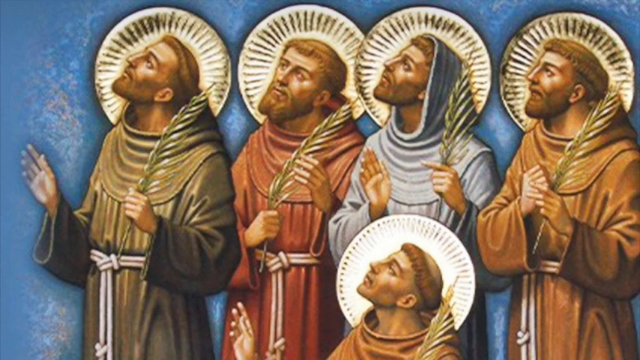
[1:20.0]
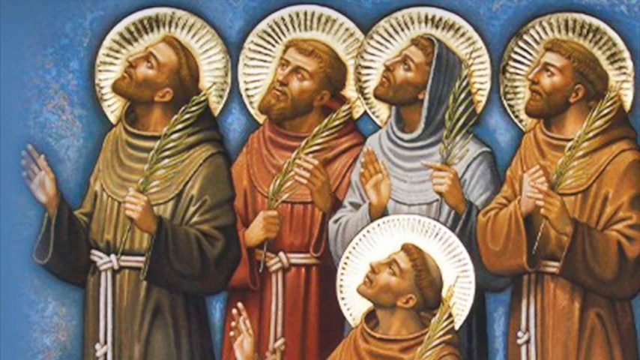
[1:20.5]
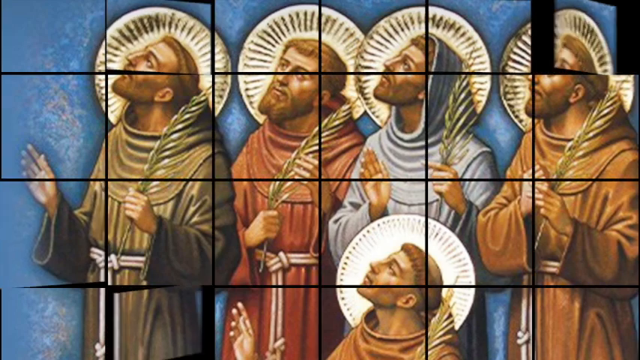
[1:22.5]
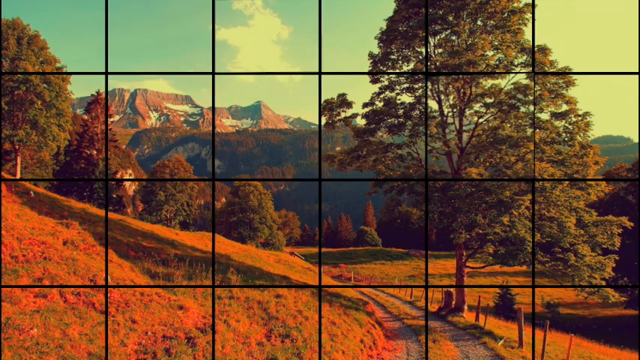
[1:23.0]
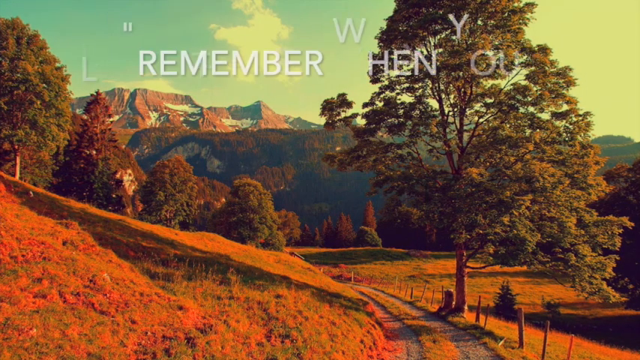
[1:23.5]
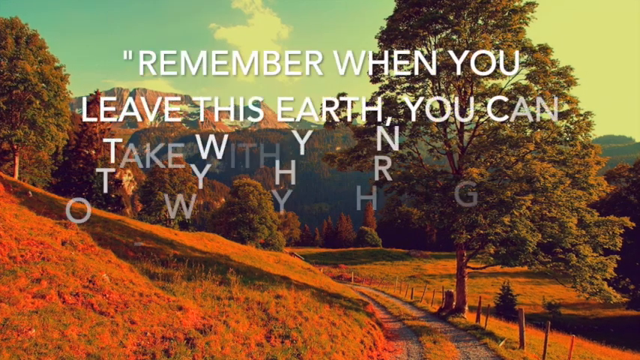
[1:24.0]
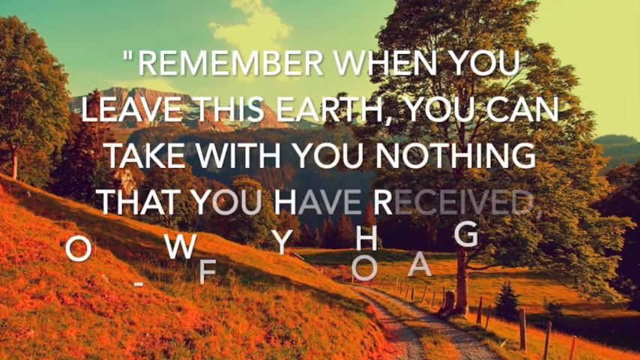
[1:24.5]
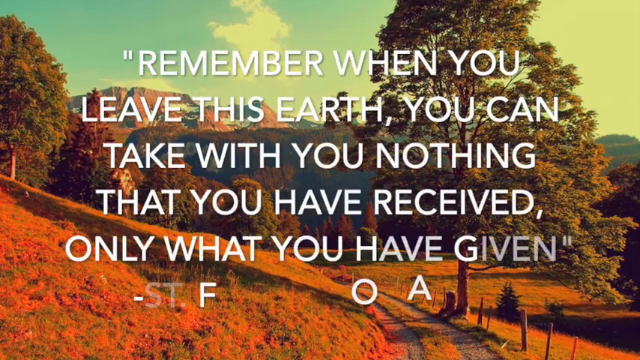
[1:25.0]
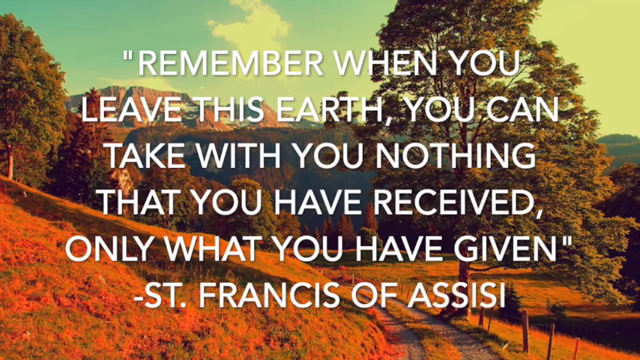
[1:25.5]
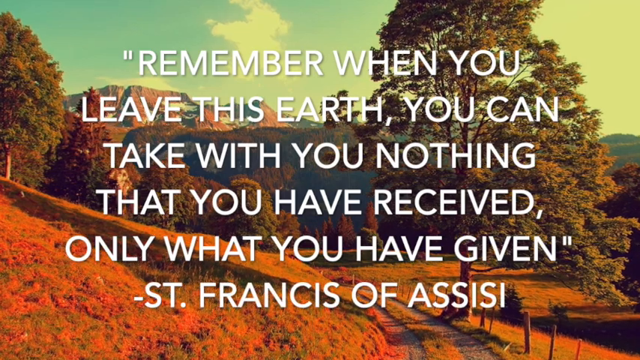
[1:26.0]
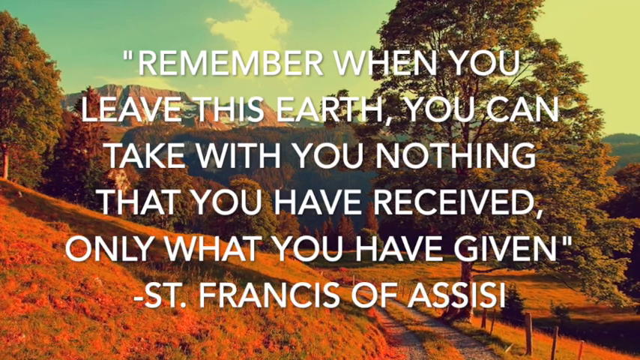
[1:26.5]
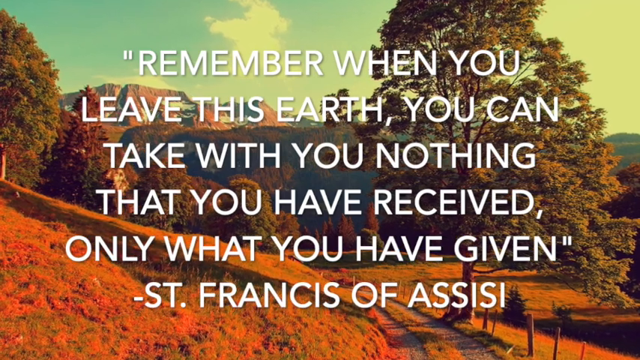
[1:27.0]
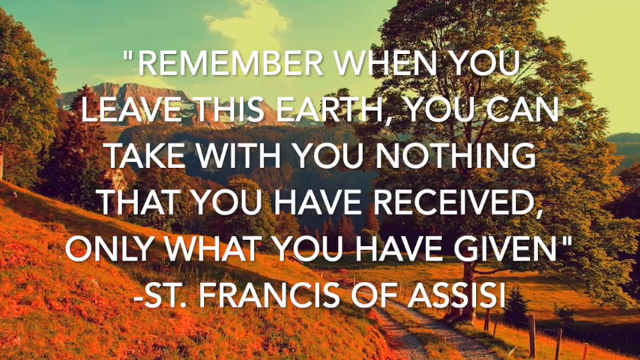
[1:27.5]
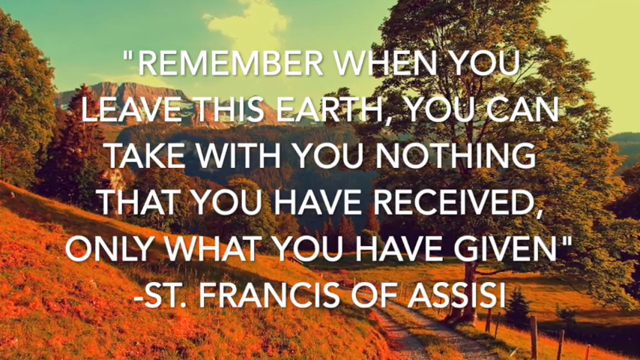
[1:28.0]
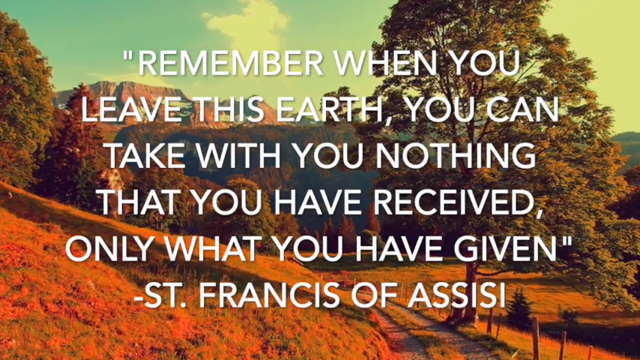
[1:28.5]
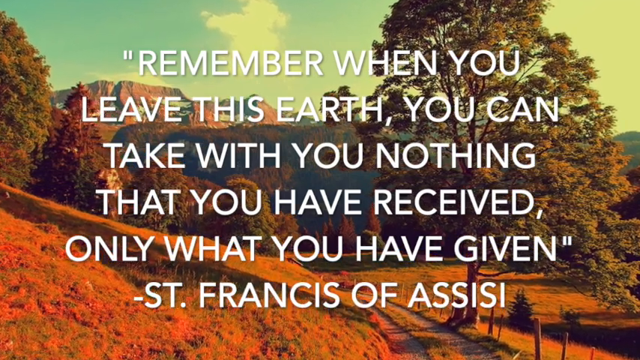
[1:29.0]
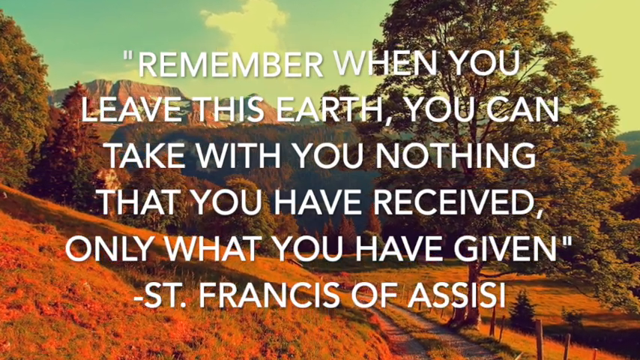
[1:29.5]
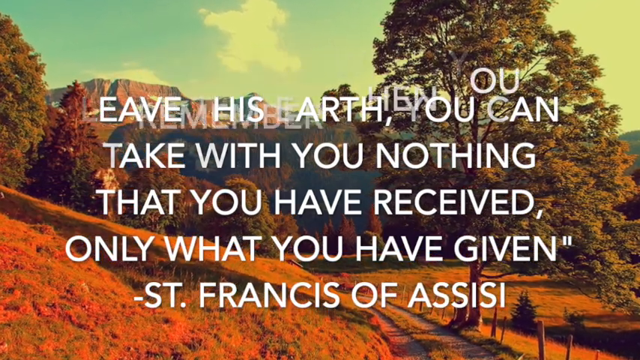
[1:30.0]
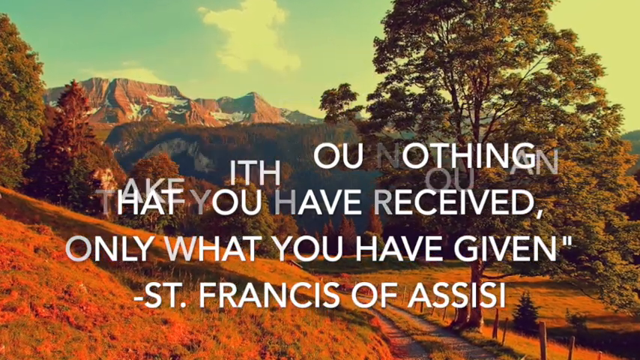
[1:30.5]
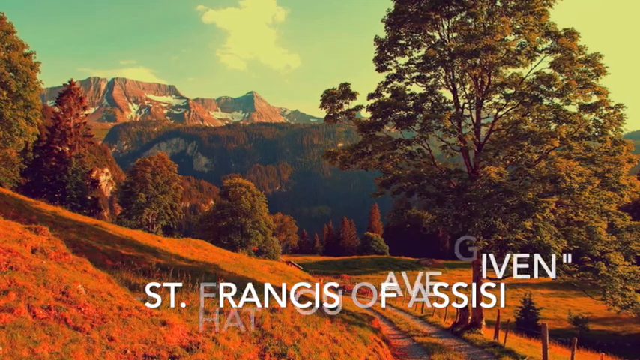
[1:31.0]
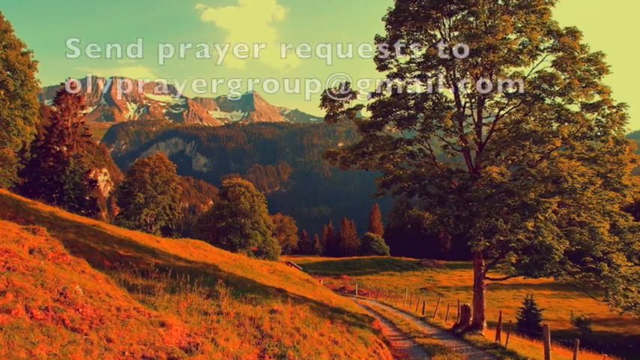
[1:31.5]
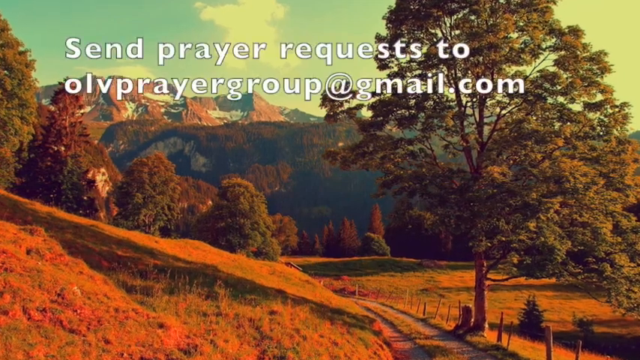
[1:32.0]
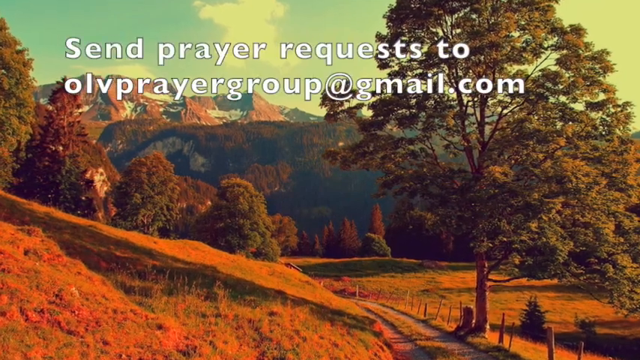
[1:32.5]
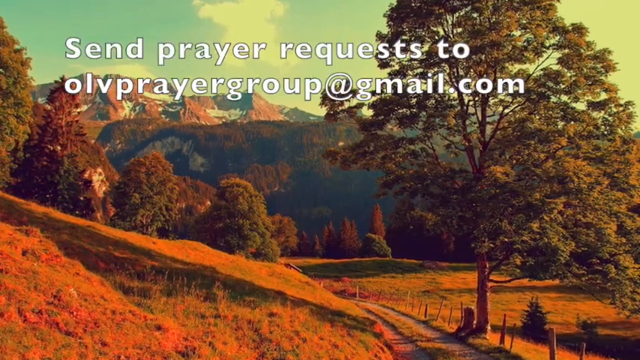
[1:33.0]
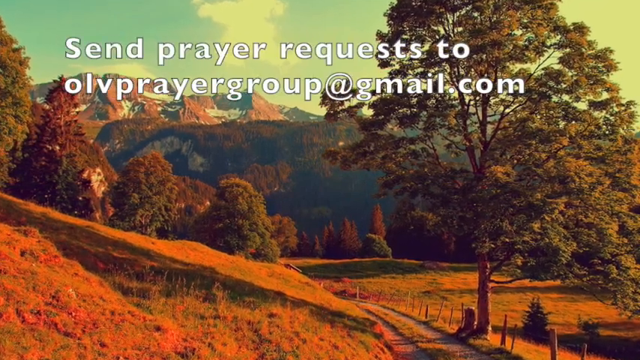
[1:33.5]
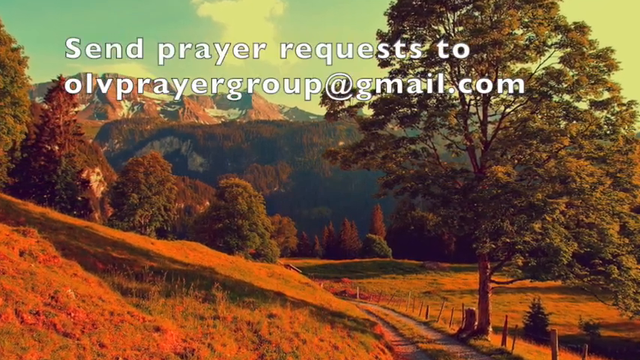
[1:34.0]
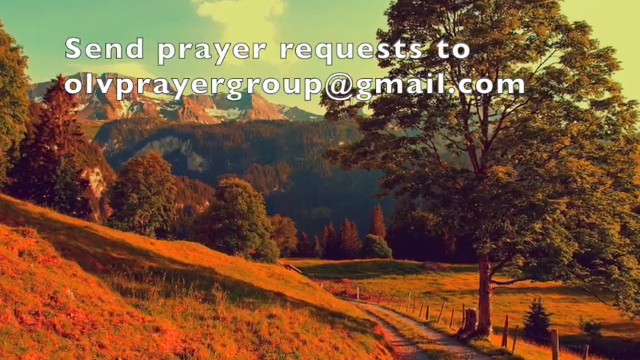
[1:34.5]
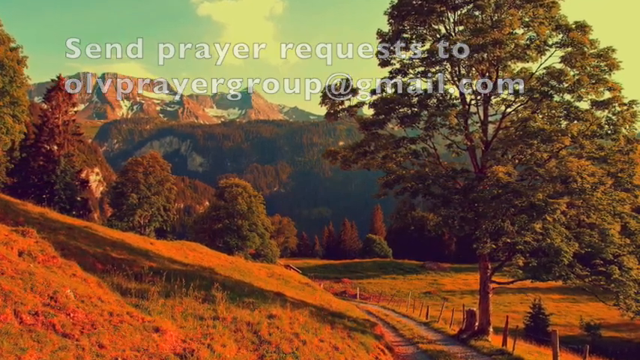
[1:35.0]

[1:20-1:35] Another picture shows five religious people. Four are standing, looking to the top left of the scene, all wearing robes, with white circular halos around them that have a shell-like pattern of lines, and all have beards. They each hold a piece of wheat or a feather in one hand. A male at the bottom does the same and looks the same, except that he is kneeling down; he also looks to the top left. The robe colors of the four standing people, in order, are green, red, light blue and orangey brown. This transitions into a painting or photo of the initial scene: the hills with trees just above, mountains in the top left, a large tree on the right-hand side and a country road just to the left of the tree. New text reads "remember when you leave this earth you can take with you nothing that you have received, only what you have given", a quote by Saint Francis of Assisi, while the background image slowly zooms in. The text then drops off the bottom of the screen, and new white text at the top of the screen says "send prayer requests to olvprayergroup at gmail.com".